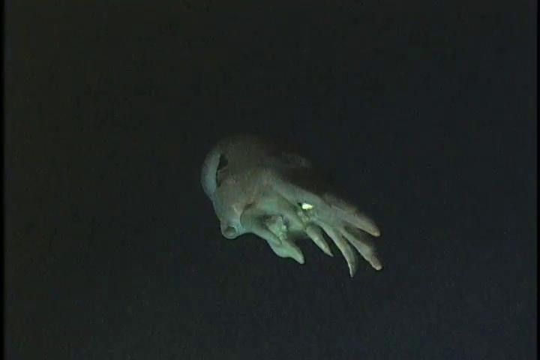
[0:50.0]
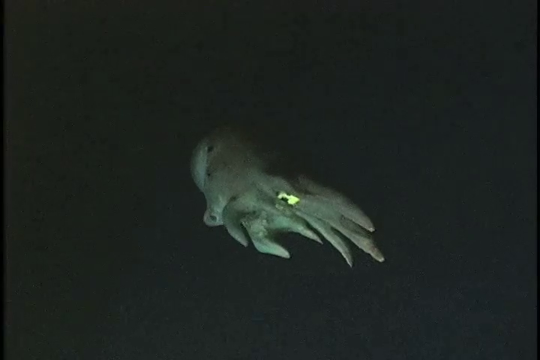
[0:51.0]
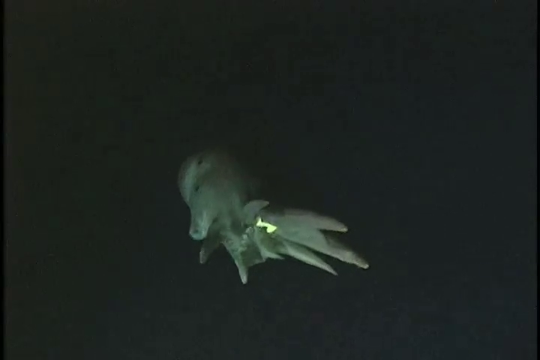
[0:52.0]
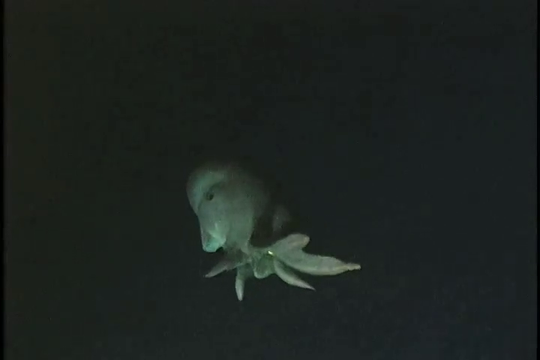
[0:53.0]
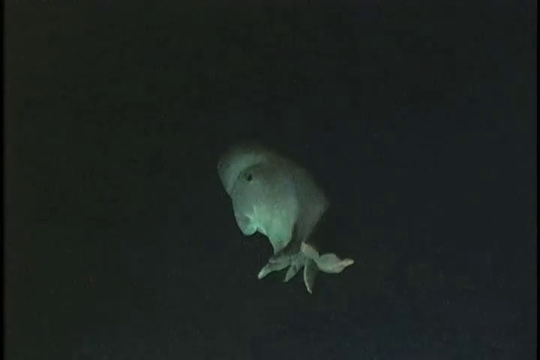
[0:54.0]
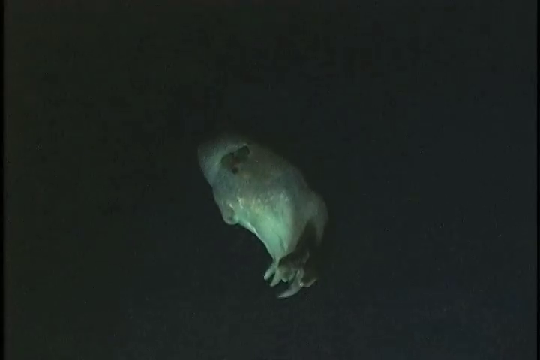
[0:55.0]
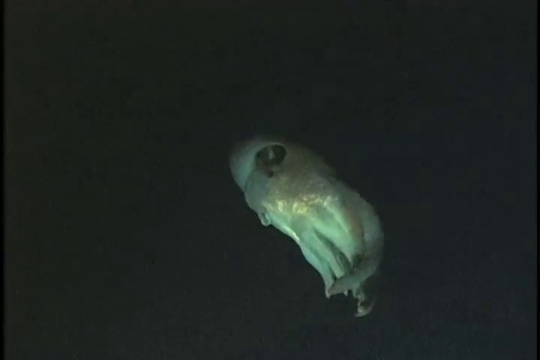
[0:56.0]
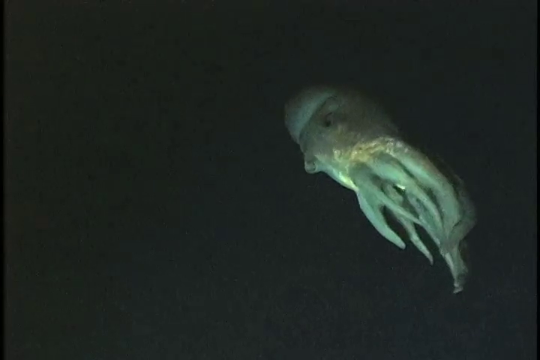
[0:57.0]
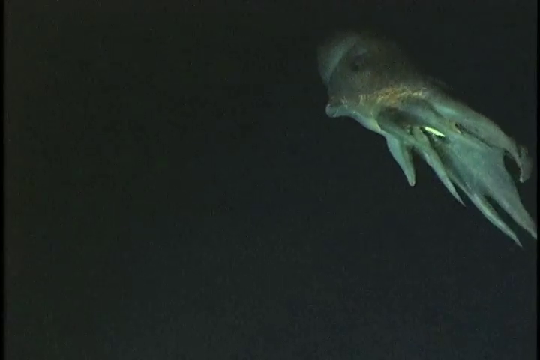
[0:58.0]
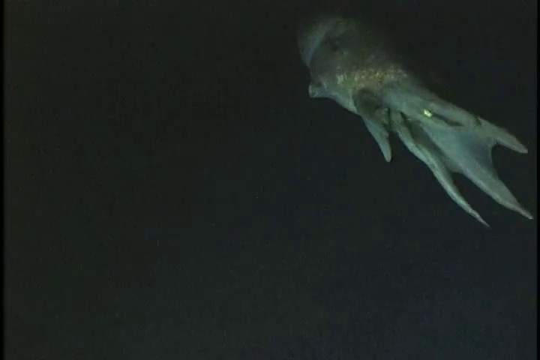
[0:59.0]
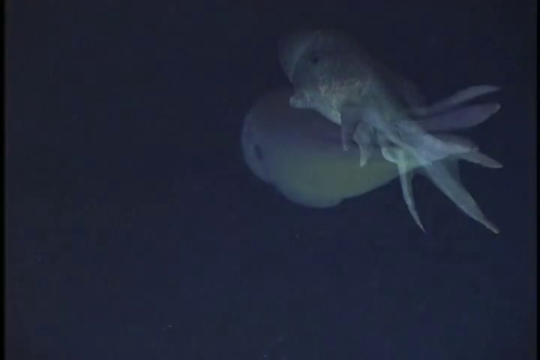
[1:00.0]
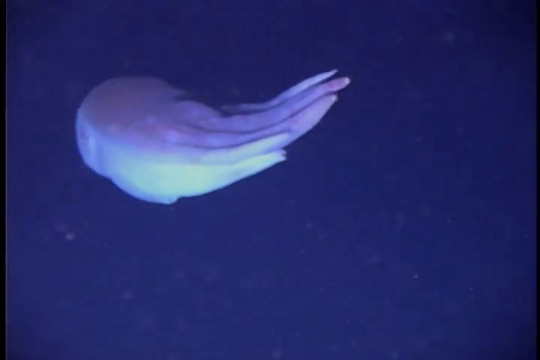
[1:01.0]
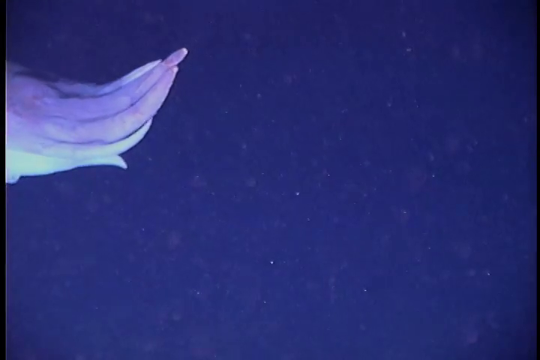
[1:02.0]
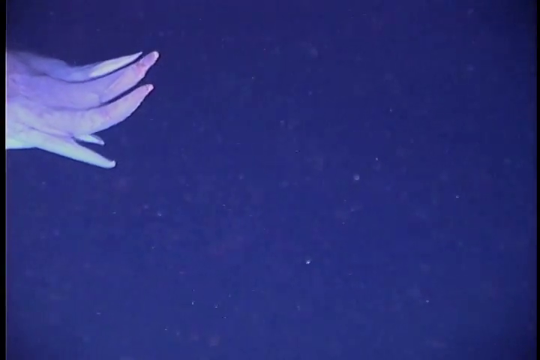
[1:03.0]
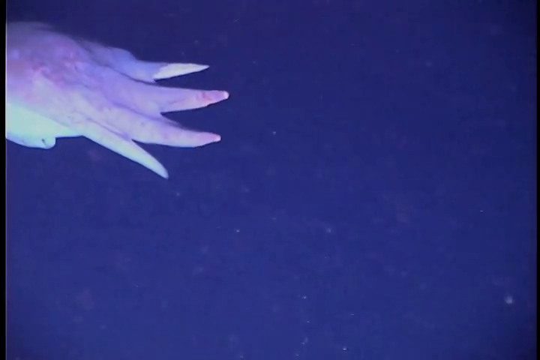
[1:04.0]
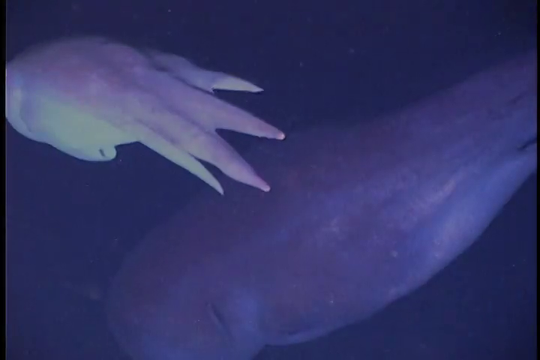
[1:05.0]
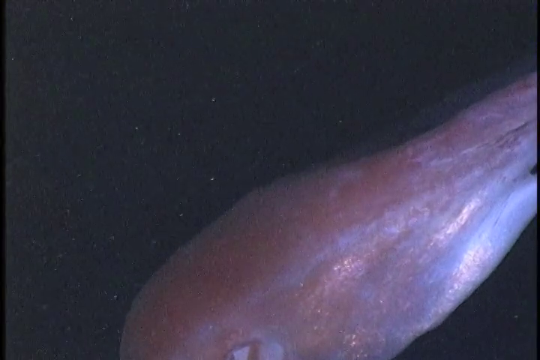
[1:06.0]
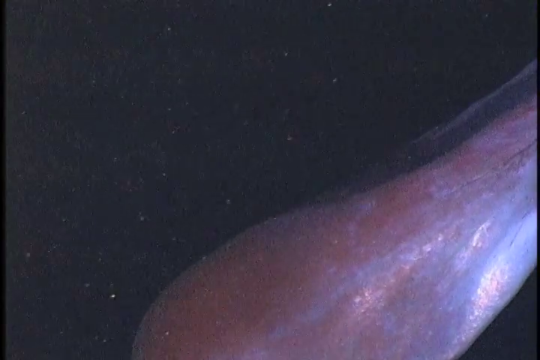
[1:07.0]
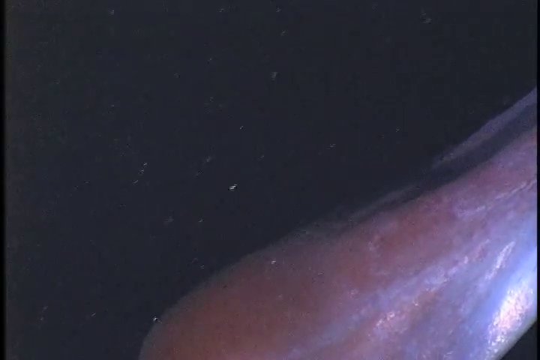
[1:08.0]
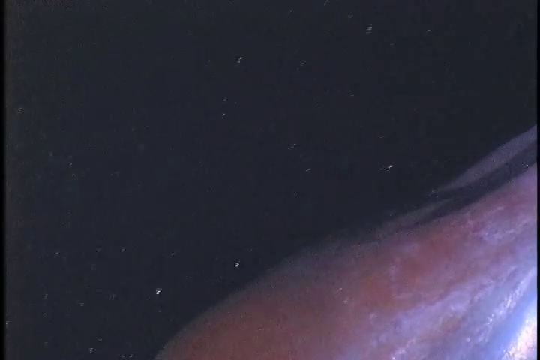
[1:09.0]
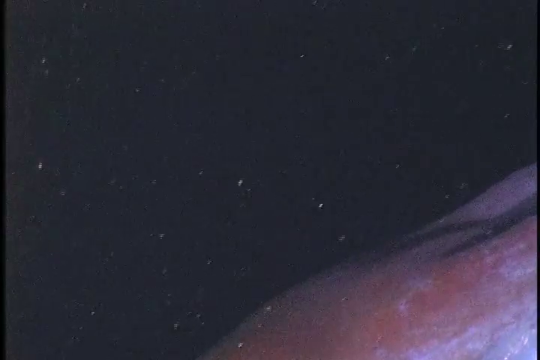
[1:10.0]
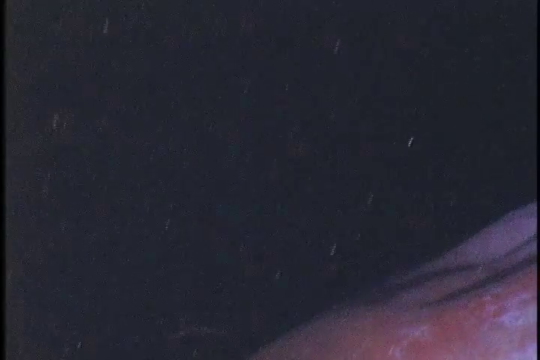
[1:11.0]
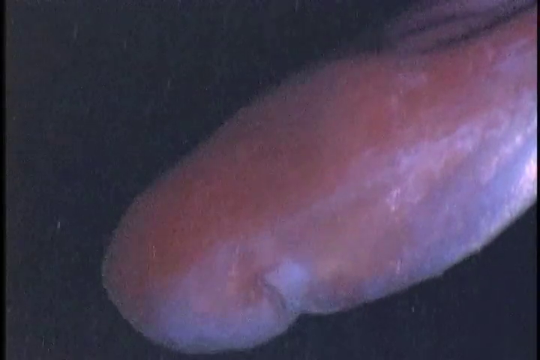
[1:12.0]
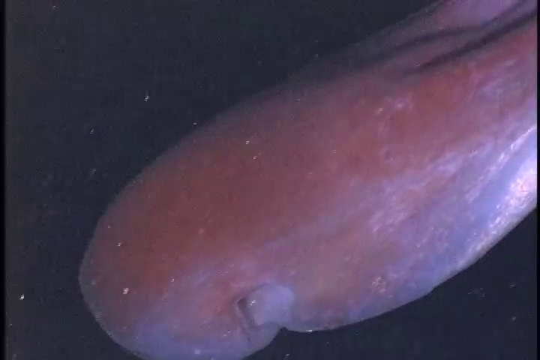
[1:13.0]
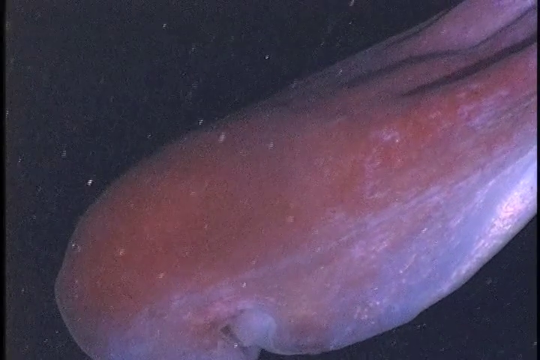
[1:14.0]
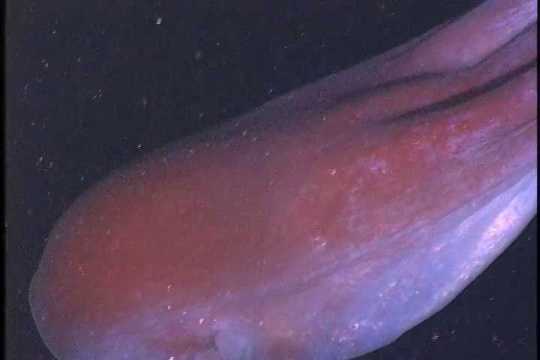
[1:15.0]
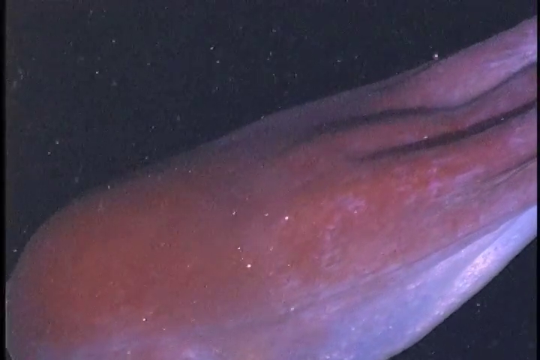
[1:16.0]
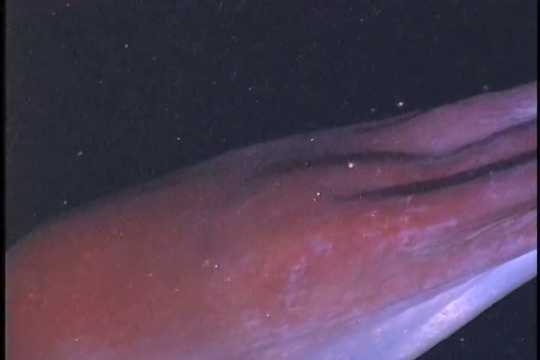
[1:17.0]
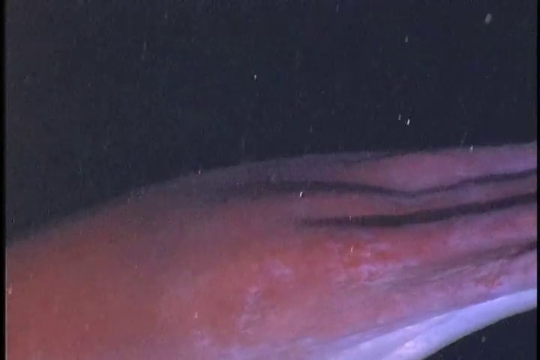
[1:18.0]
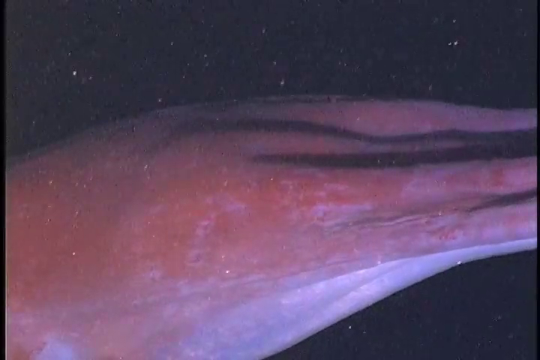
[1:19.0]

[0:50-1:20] The strange organism swims in the middle of the darkness. Under its tentacles there seems to be something yellow, a kind of organ or yellow sphere. It is hard to see where its eyes are; it looks like a gray oval mass with tentacles coming out of one side, almost like a deformed human hand floating in the water. The footage continues to show the animal swimming.